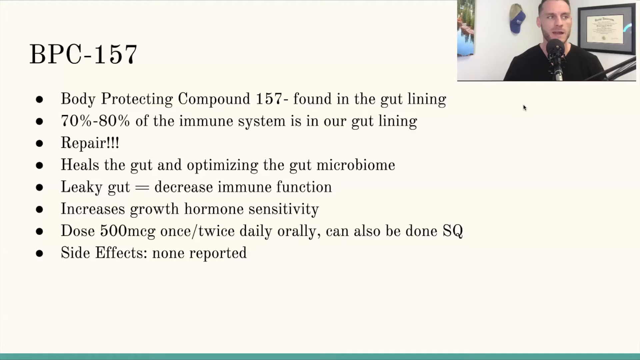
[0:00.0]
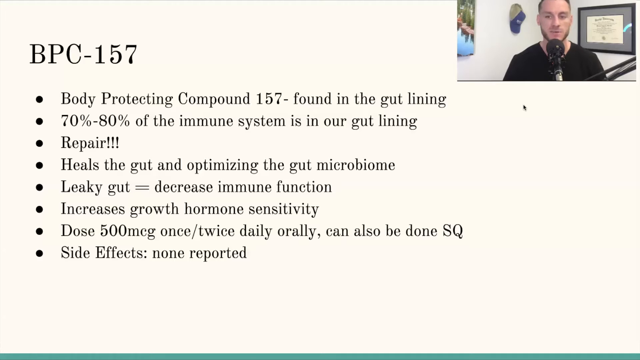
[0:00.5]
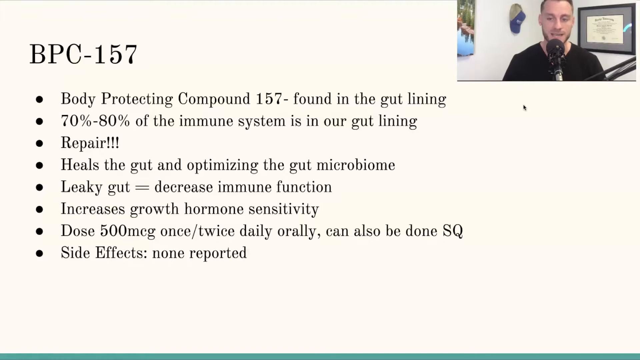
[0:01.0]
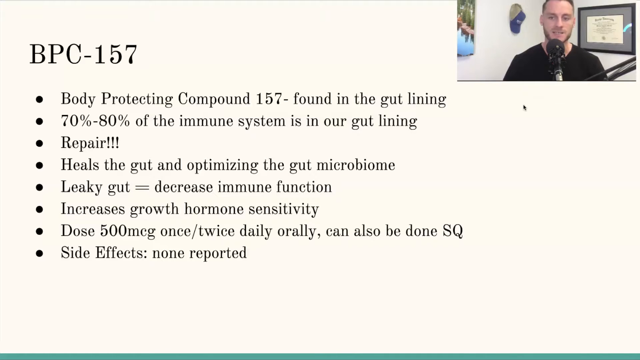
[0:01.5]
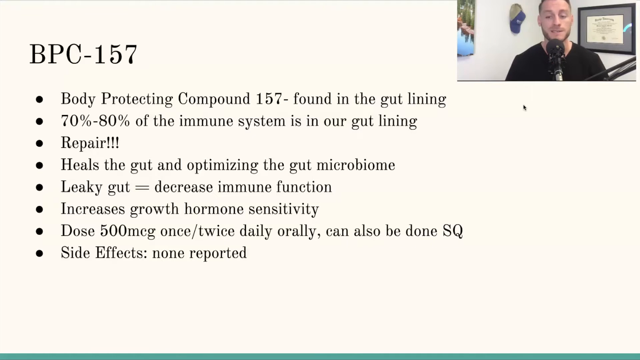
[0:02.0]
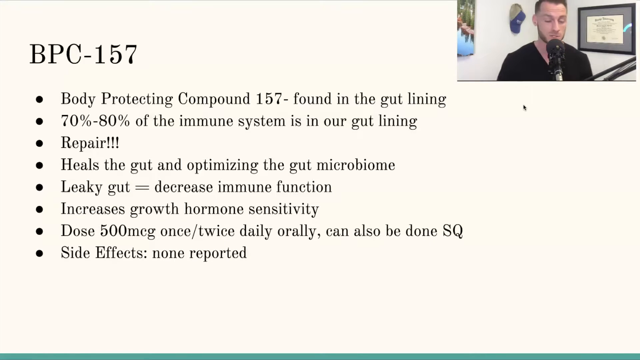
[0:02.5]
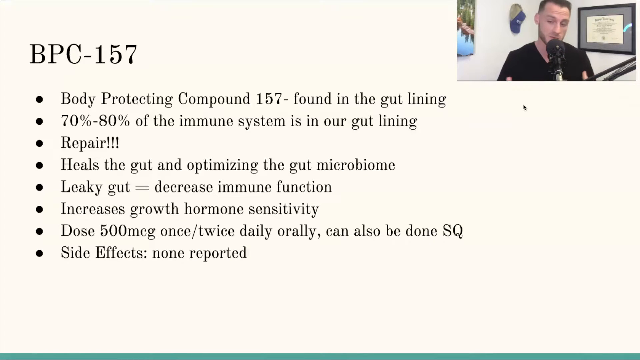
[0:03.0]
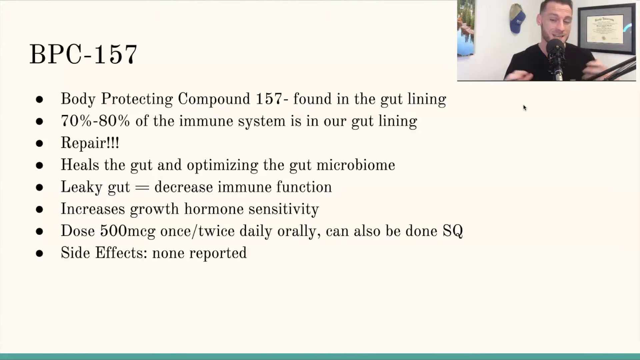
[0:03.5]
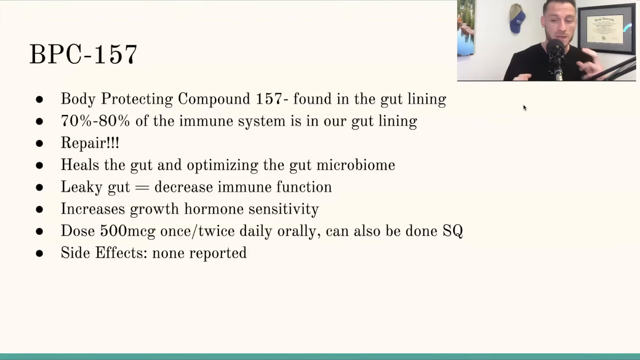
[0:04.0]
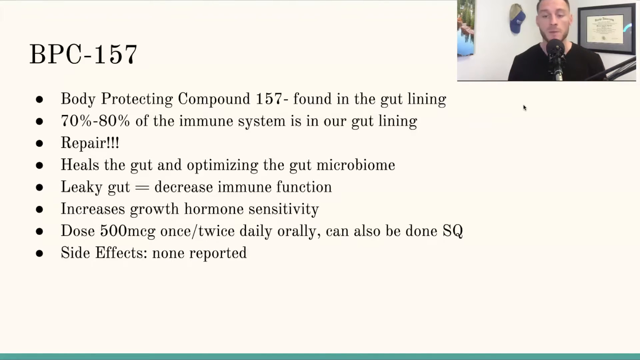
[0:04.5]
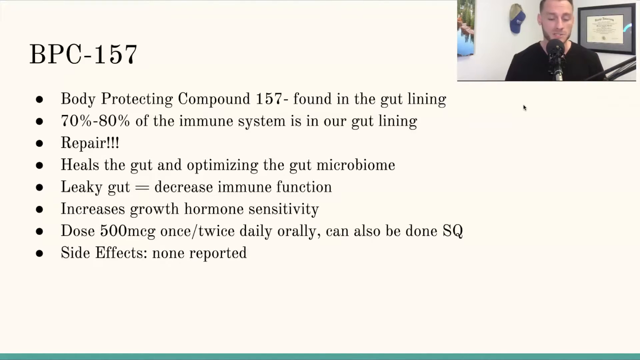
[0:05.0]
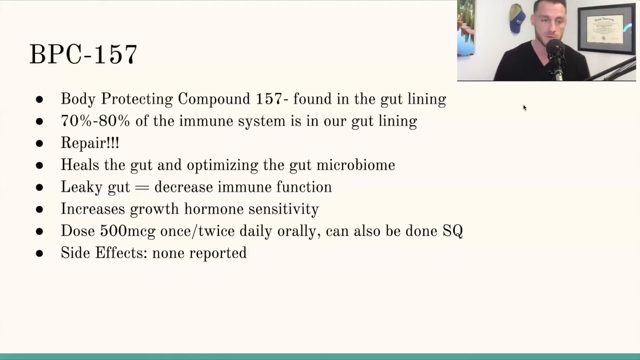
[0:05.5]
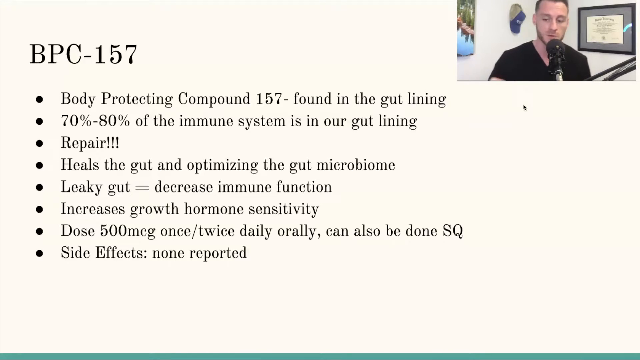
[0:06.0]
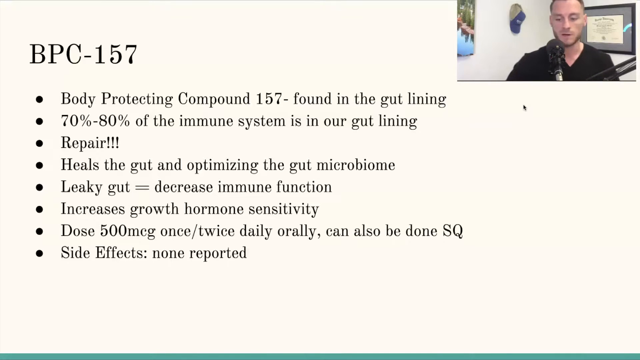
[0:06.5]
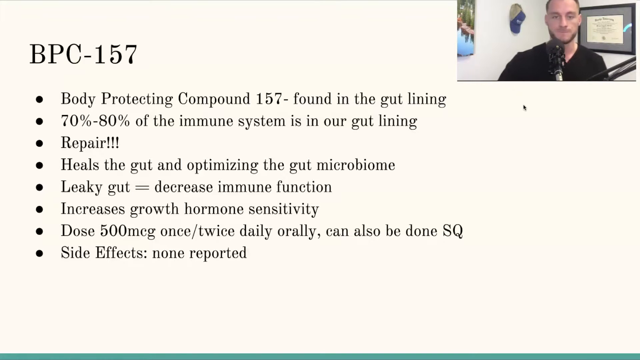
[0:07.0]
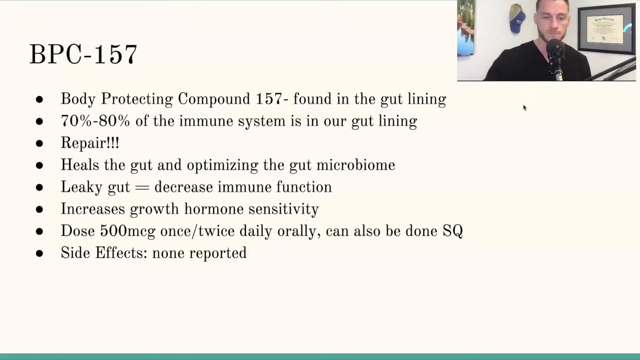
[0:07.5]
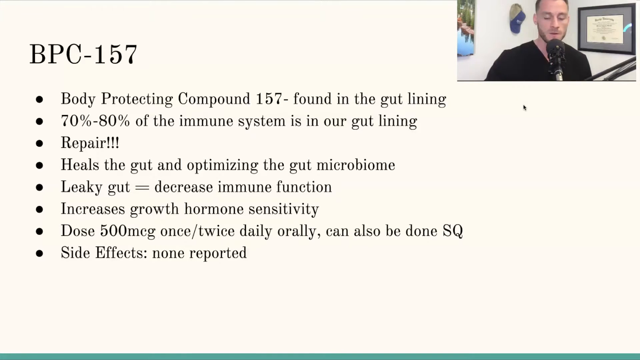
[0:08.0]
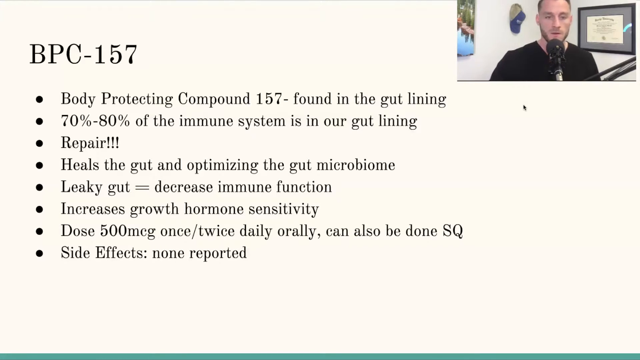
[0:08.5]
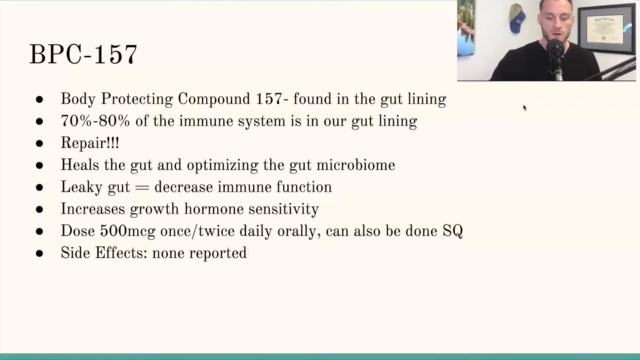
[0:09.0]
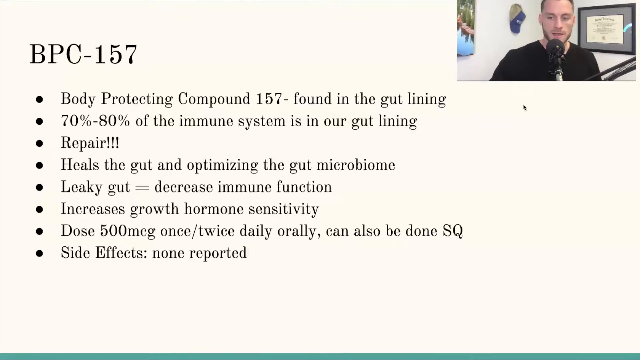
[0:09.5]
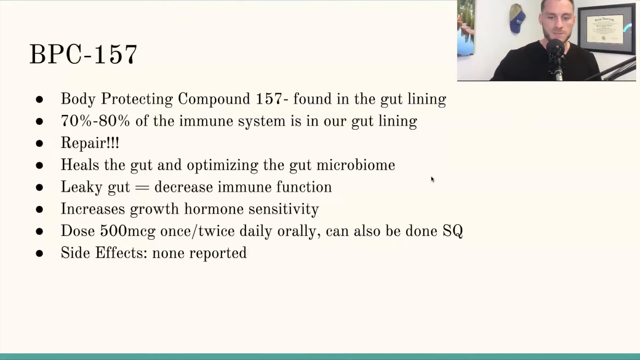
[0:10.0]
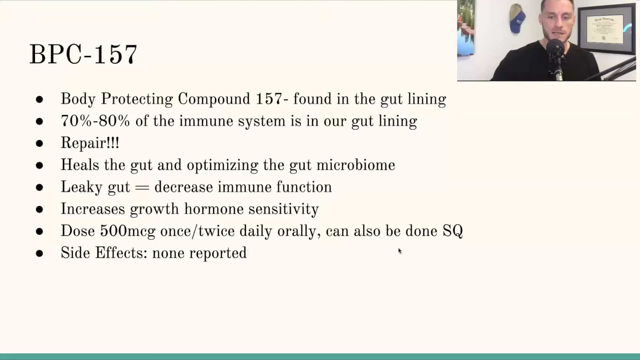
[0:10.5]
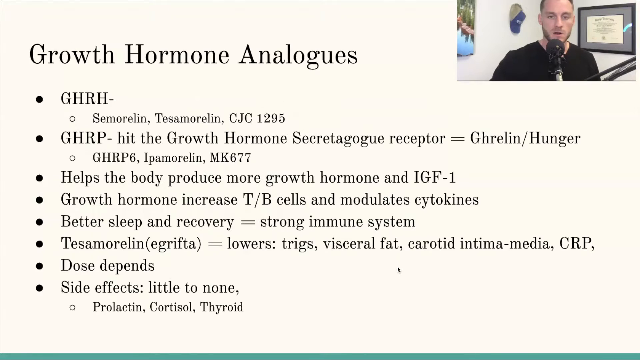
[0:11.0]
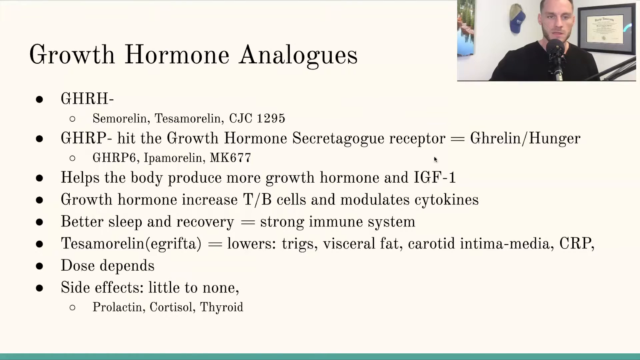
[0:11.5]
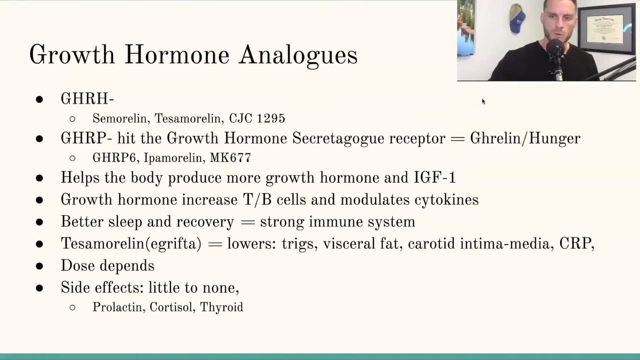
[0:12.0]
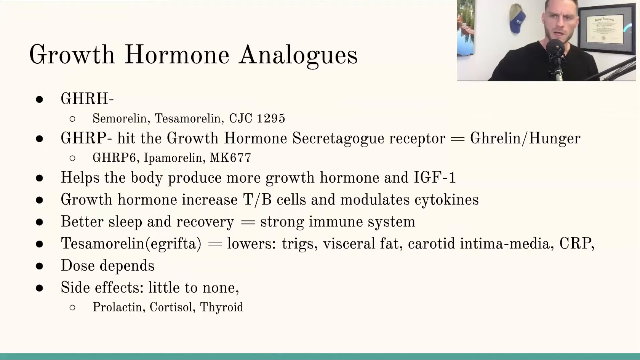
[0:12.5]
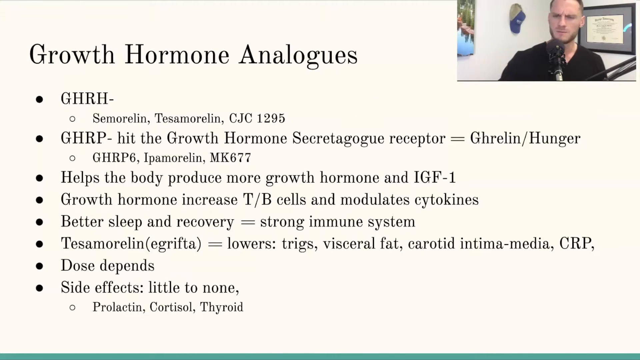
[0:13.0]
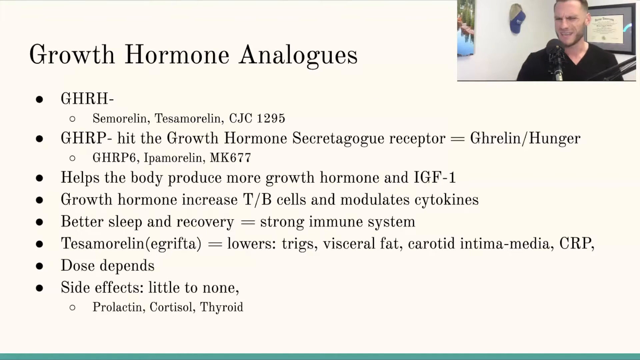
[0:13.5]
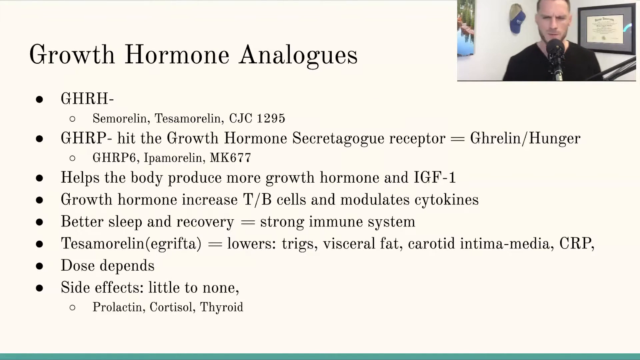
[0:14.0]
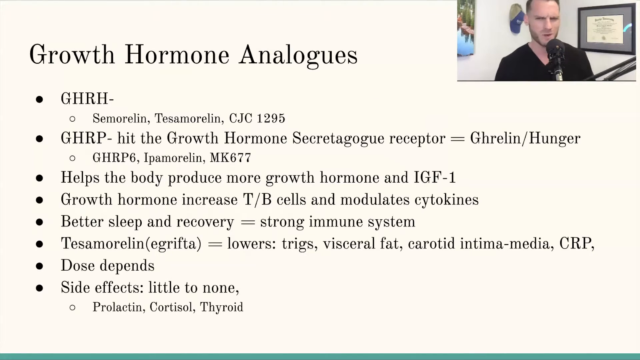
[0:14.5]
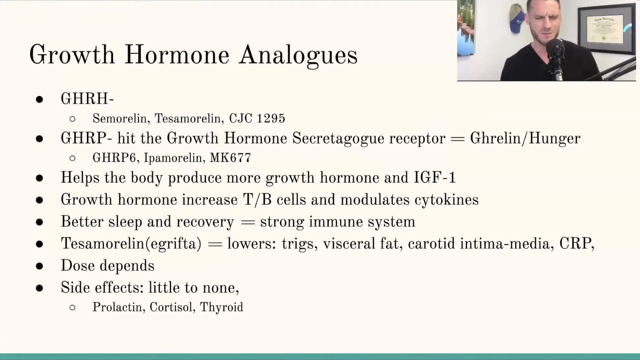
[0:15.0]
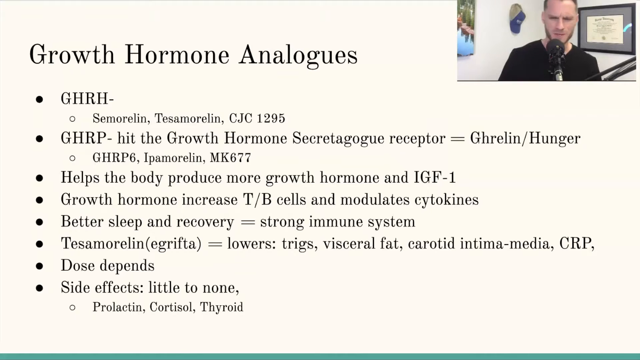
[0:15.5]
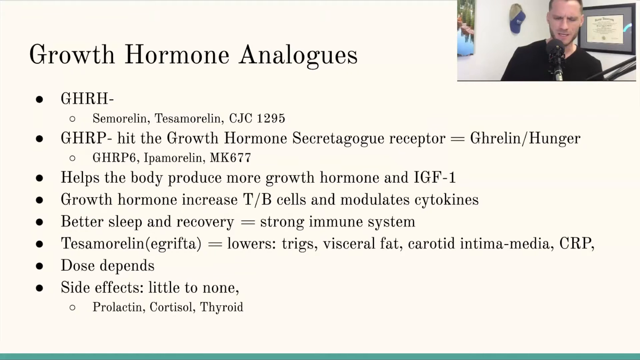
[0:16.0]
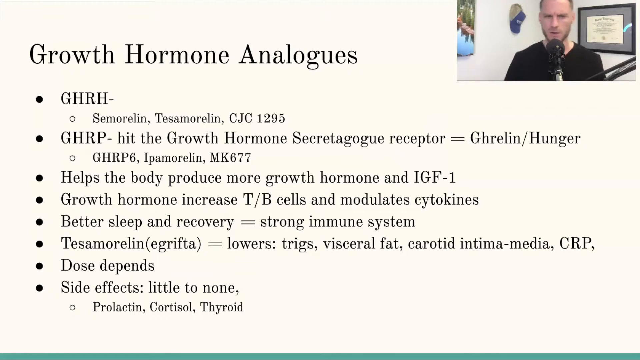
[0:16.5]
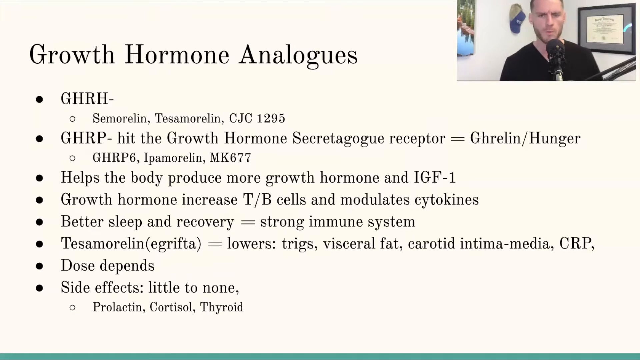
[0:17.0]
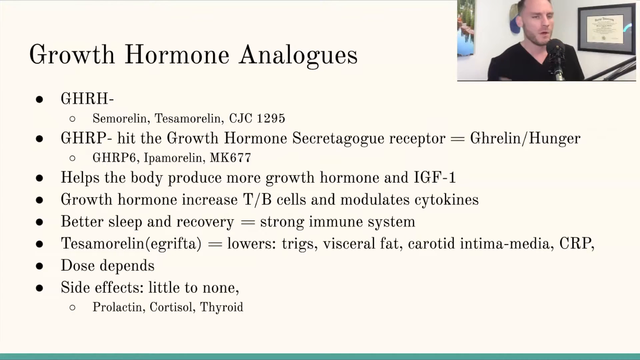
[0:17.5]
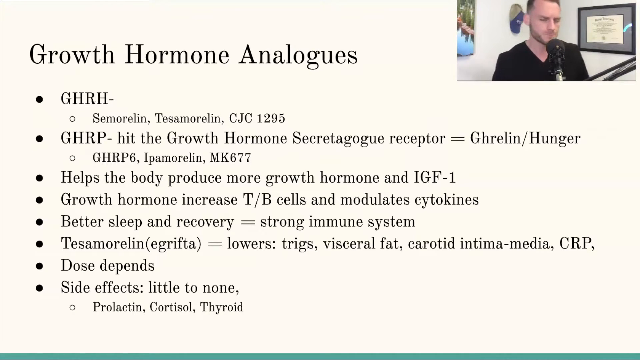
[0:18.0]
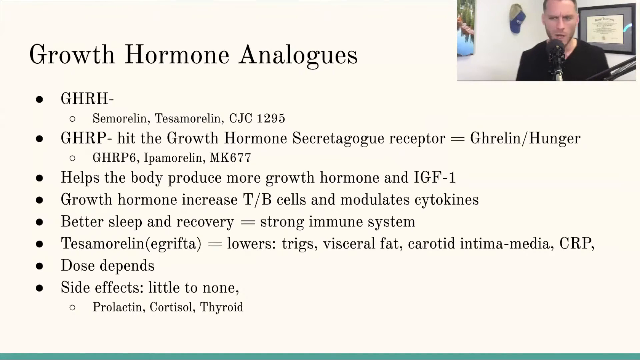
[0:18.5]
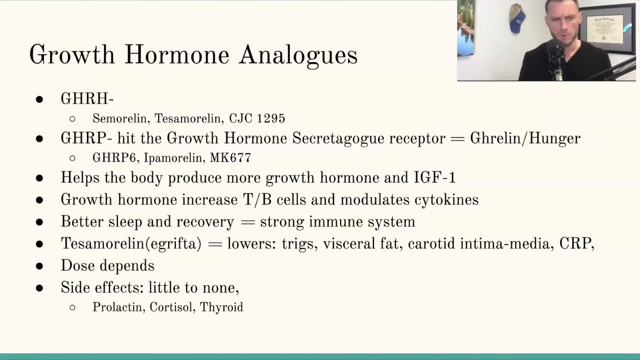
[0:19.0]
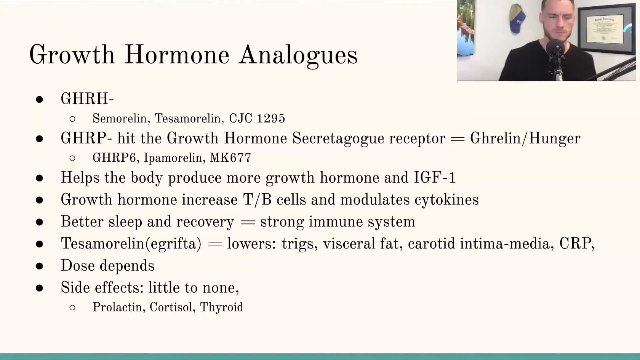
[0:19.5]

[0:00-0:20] The video appears to be a webinar in which a man goes through a slideshow, apparently on growth hormones. The man appears in the top right of the screen, talking into a microphone, with various home office items behind him. The first slide reads "BPC-157", "body protecting compound 157", "found in the gut lining", "70 to 80 percent of the immune system is in our gut lining", "Repair!!!" with three exclamation marks, "heals the gut, optimising the gut microbiome", "leaky gut equals decrease immune function", "increases growth hormone sensitivity", "dose is 500 meg once or twice daily orally", "can also be done SQ" and "side effects non-reported". He uses his hands as he talks.